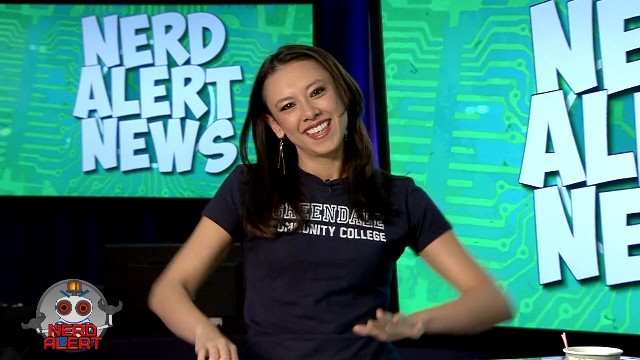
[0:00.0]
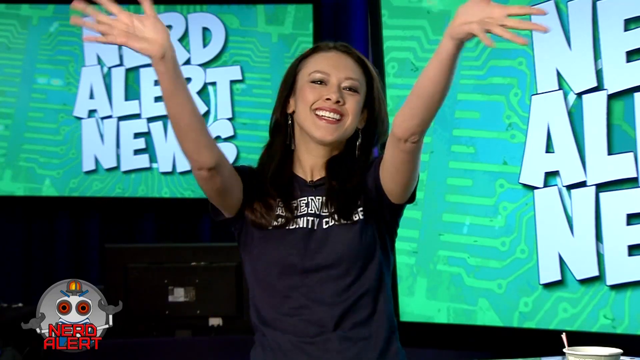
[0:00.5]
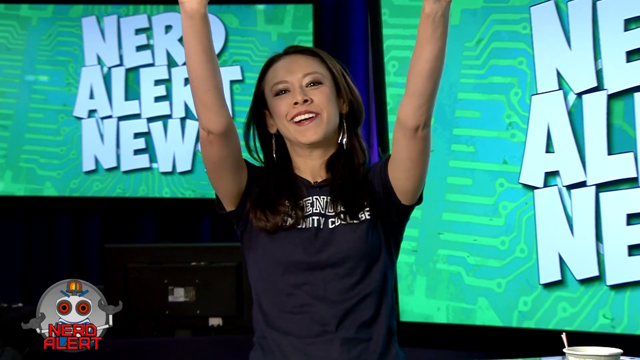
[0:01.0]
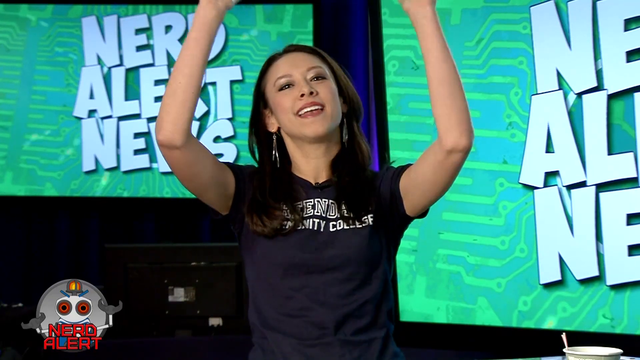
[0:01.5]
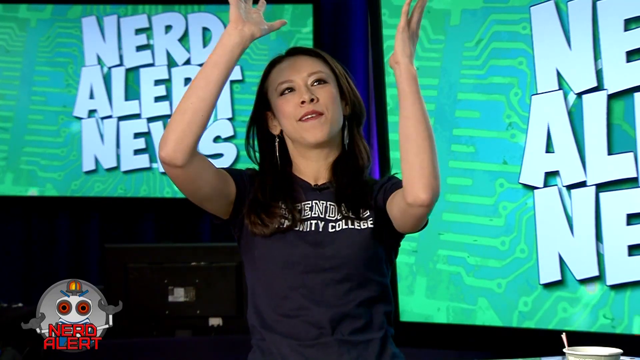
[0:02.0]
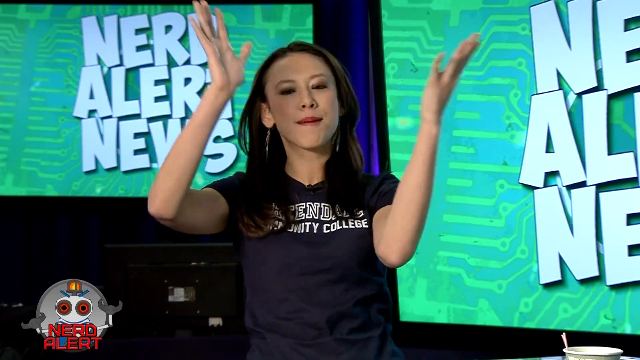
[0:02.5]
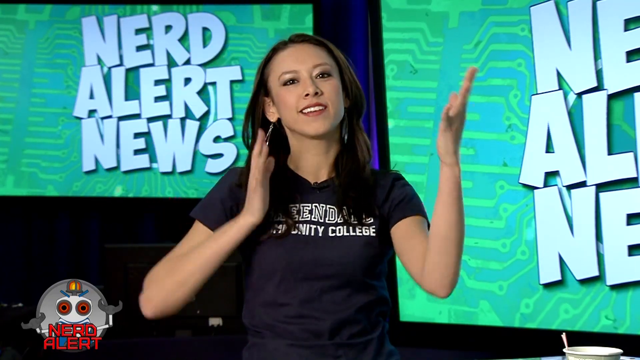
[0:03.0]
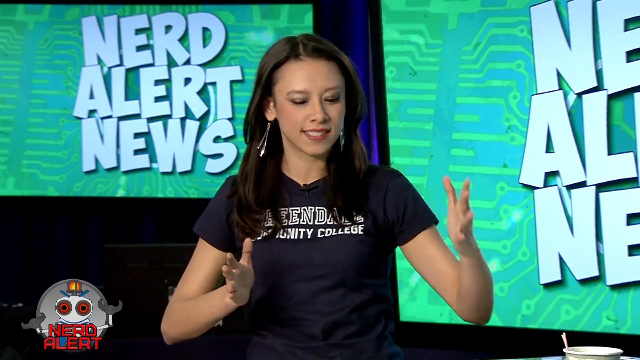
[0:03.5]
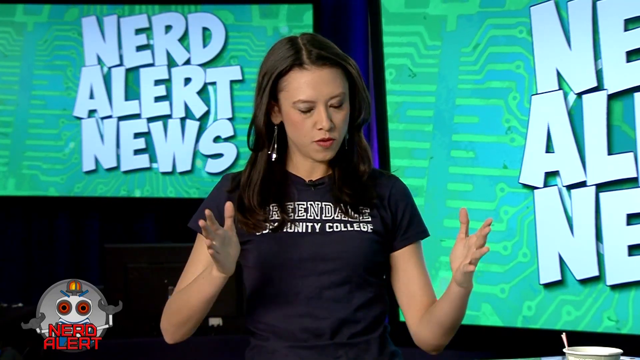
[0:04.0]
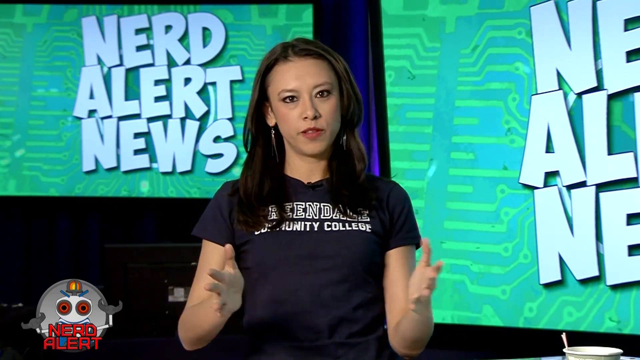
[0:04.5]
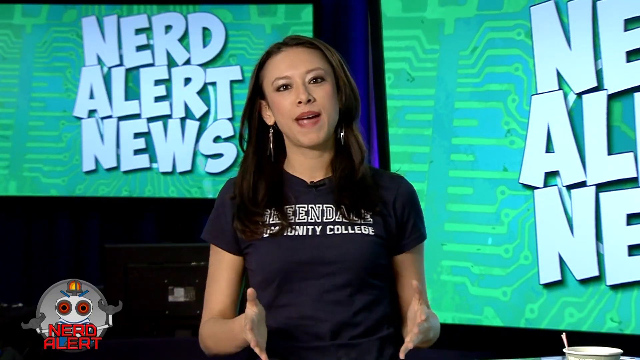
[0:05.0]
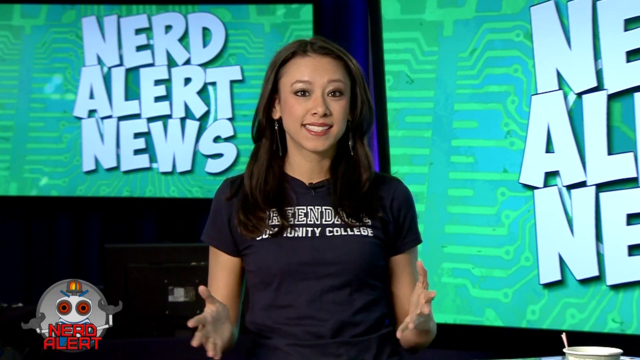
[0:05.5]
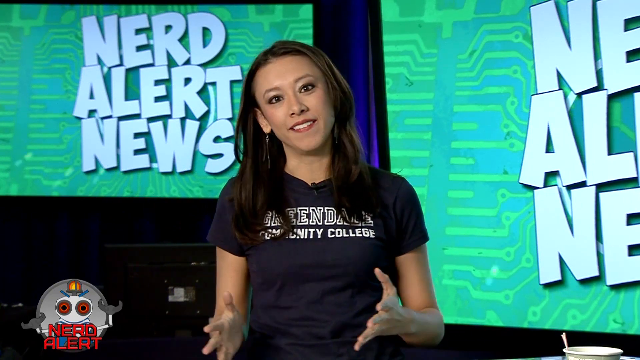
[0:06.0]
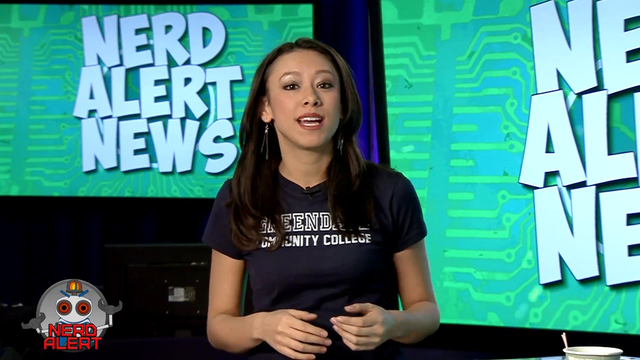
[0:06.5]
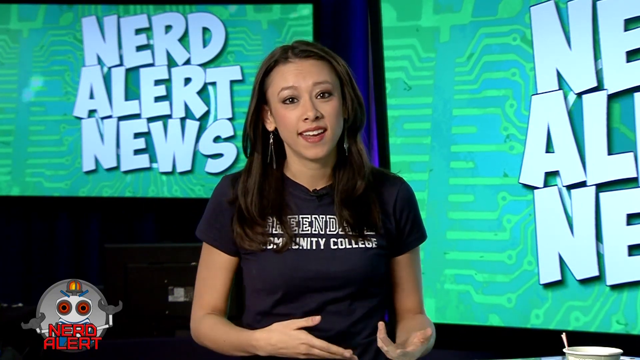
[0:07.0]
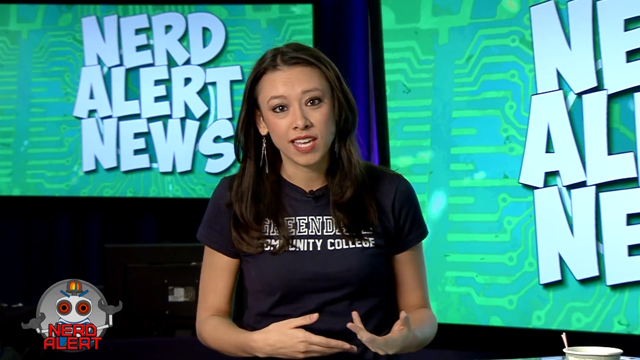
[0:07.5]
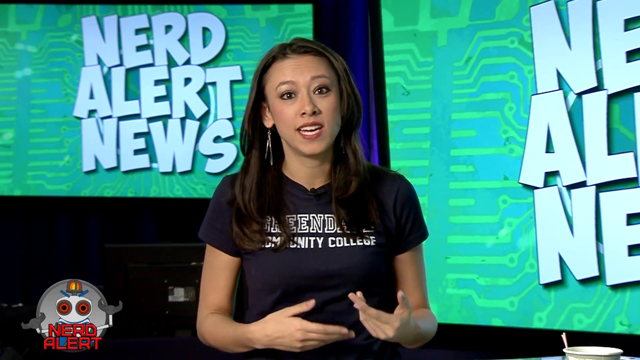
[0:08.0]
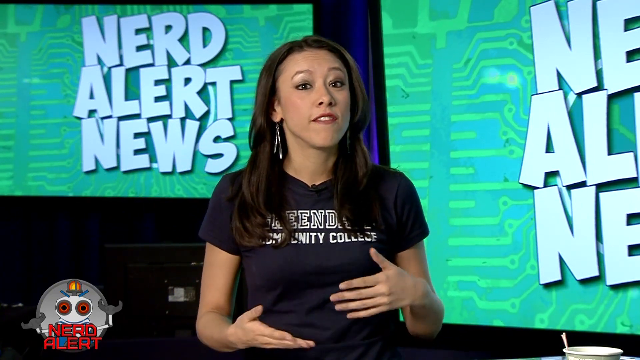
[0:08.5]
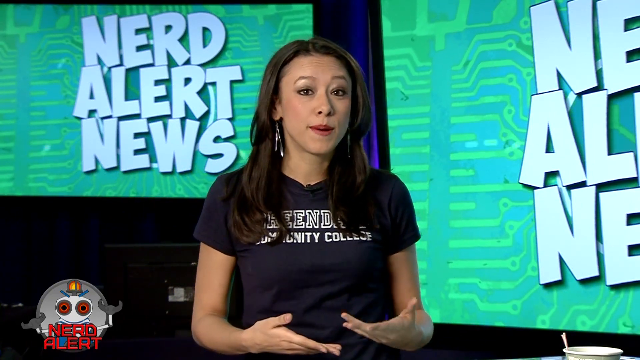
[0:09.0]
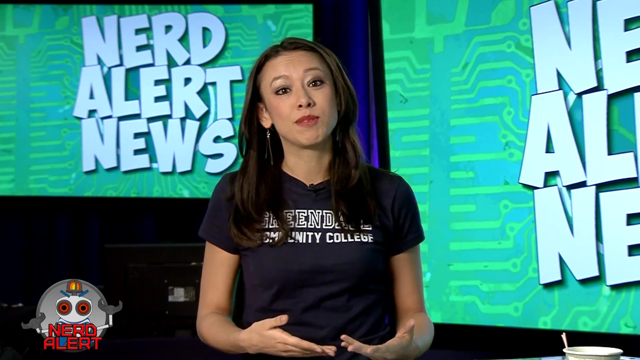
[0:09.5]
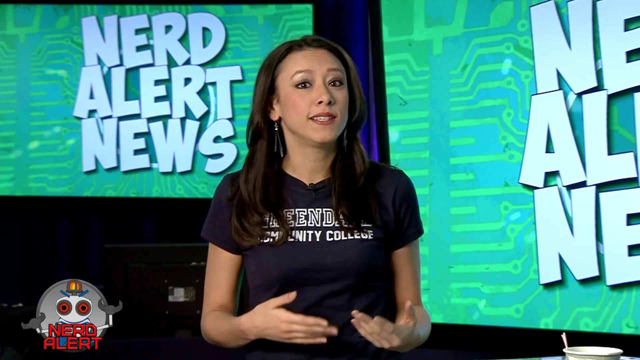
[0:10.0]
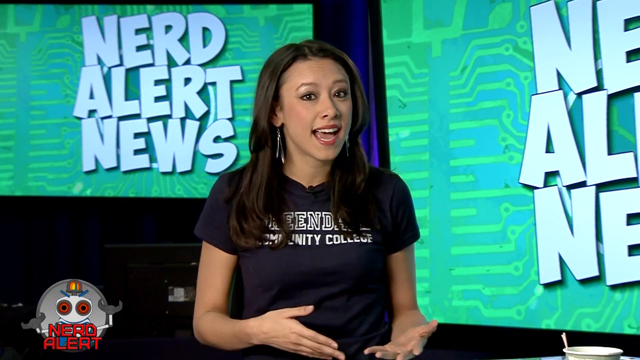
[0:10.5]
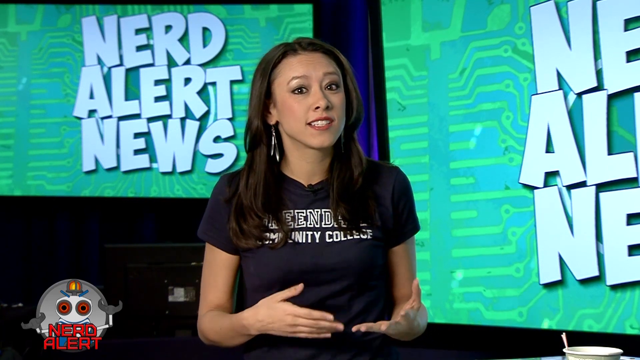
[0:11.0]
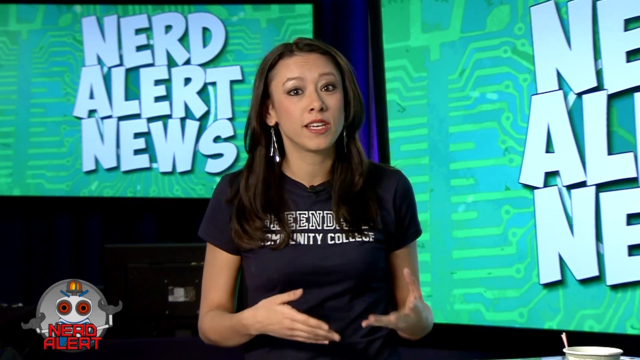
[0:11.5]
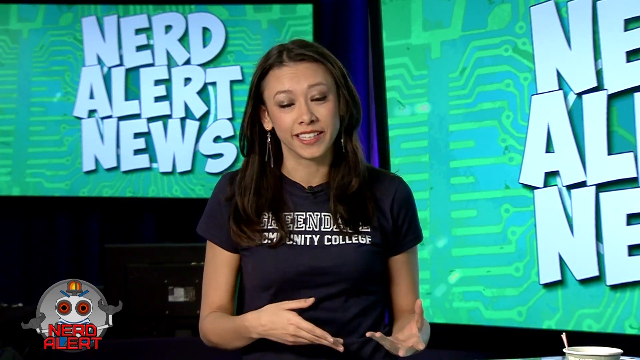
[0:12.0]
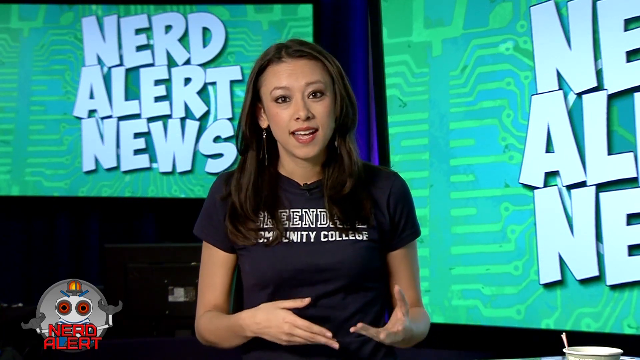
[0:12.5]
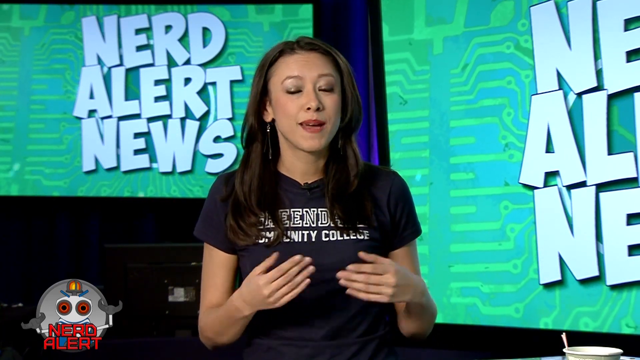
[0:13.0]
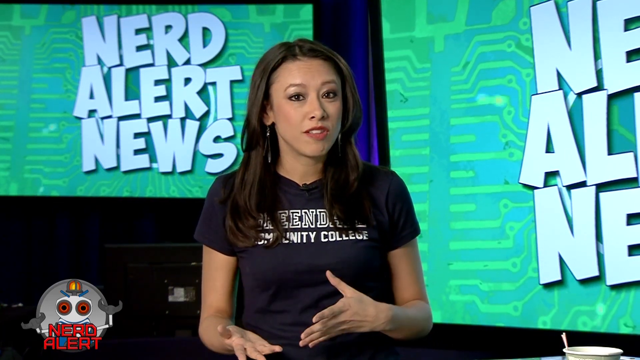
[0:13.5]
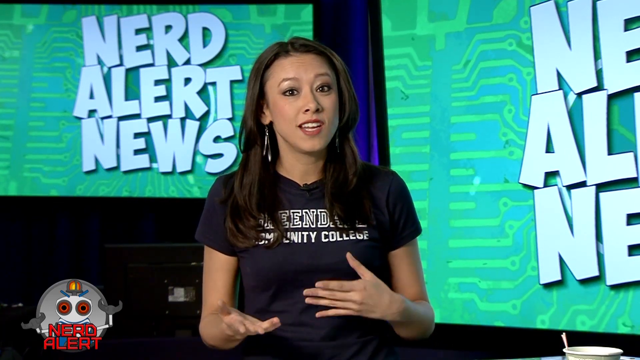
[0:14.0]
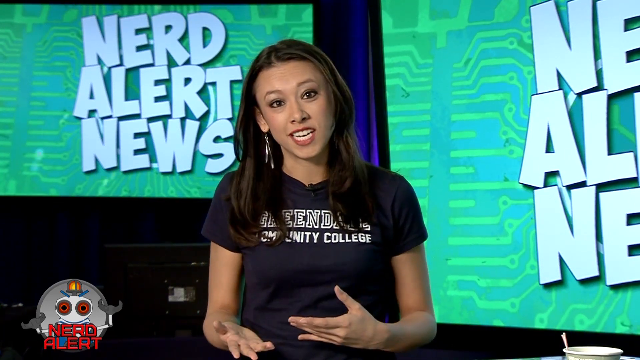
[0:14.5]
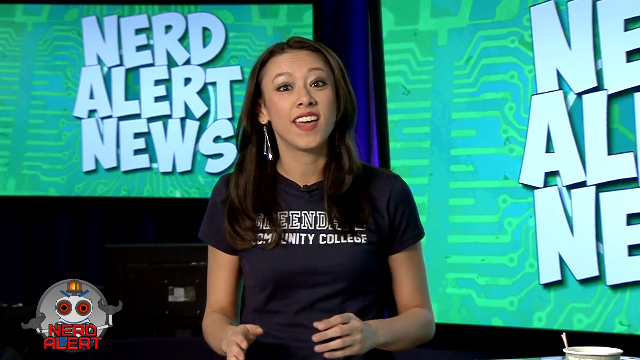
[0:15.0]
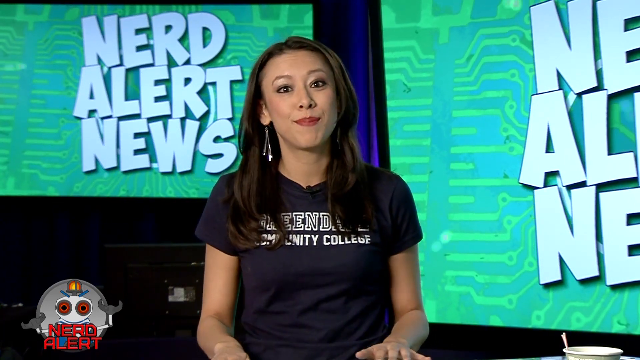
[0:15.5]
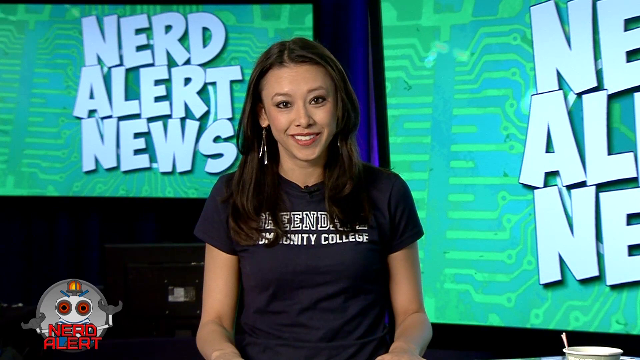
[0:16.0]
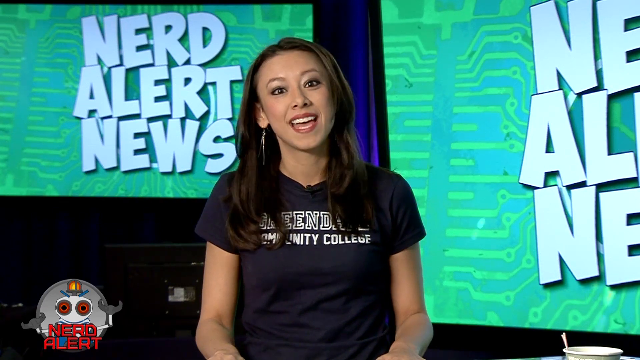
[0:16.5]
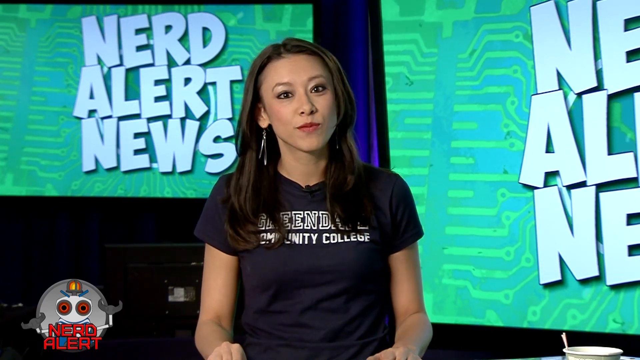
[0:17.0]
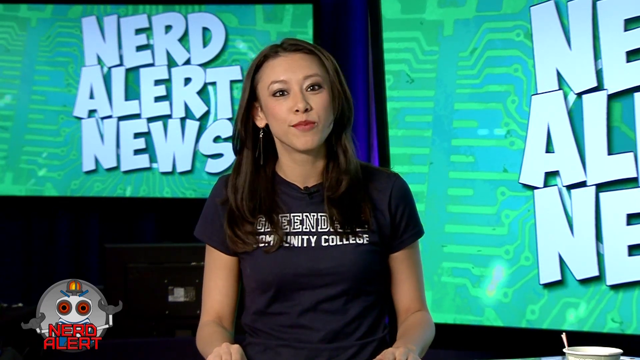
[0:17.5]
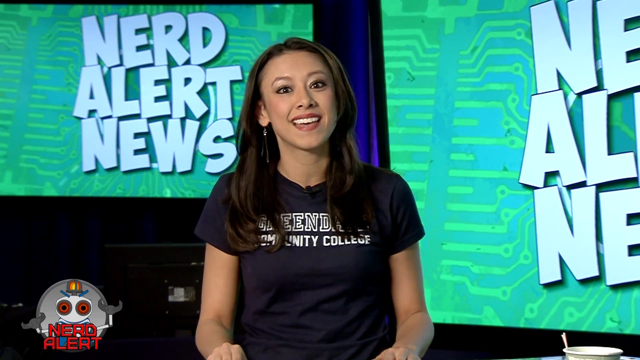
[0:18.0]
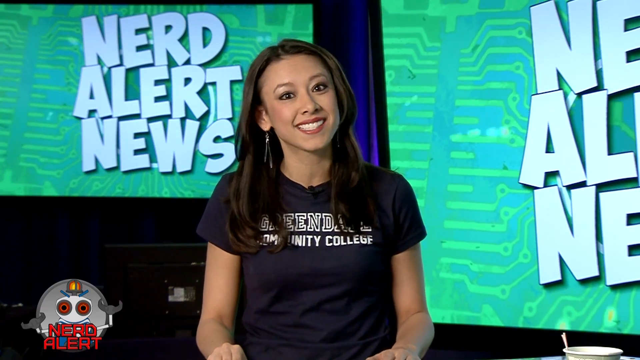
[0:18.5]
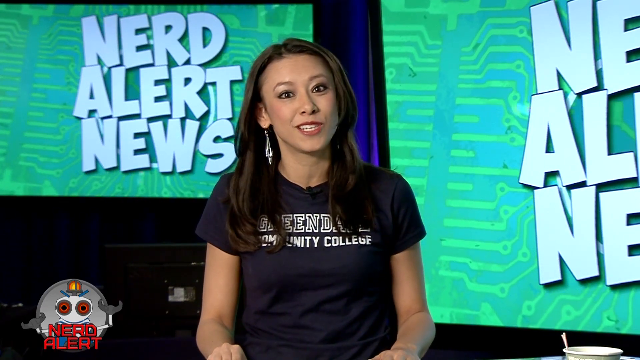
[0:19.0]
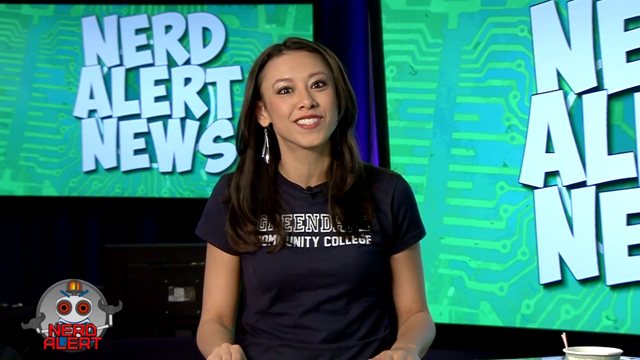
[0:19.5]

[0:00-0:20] A woman with black hair, wearing a navy blue t-shirt, appears as a news anchor, with screens on her left and right. She is smiling as she presents a nerd alert news segment.